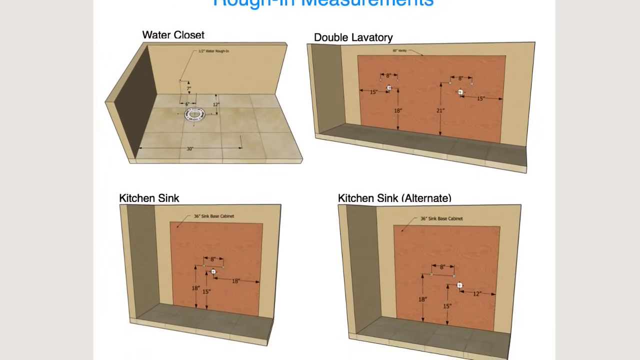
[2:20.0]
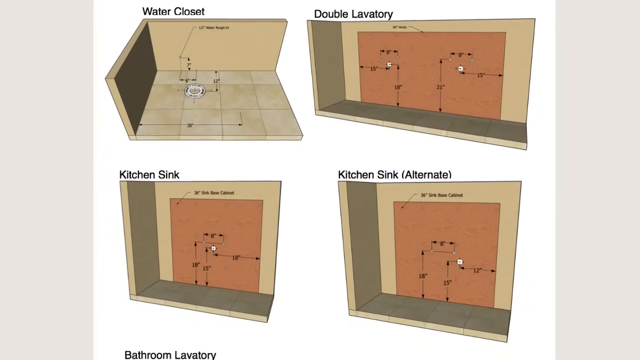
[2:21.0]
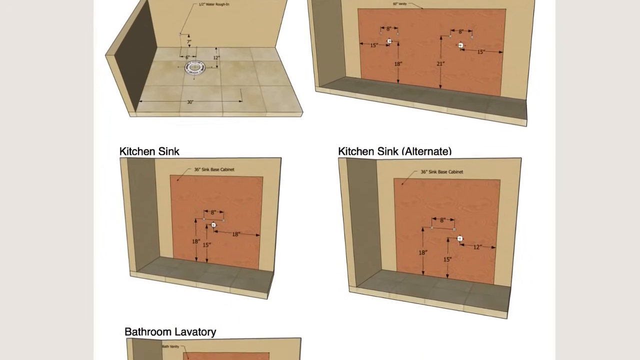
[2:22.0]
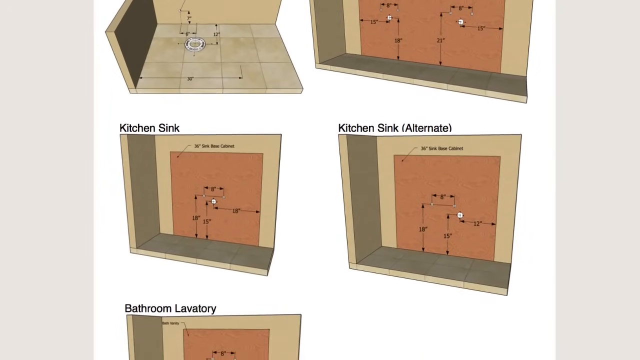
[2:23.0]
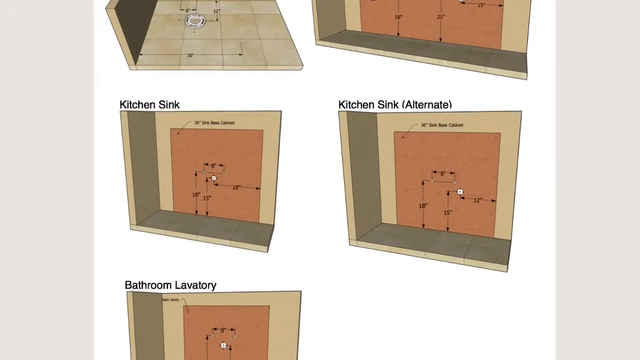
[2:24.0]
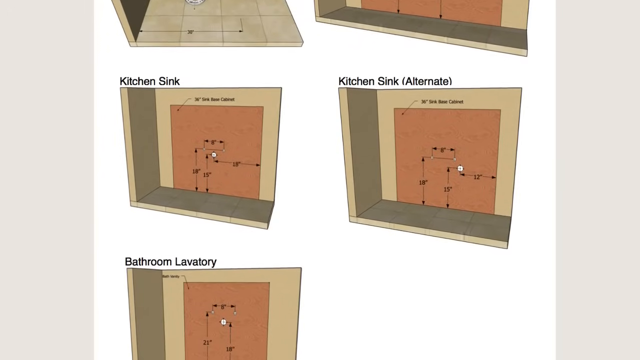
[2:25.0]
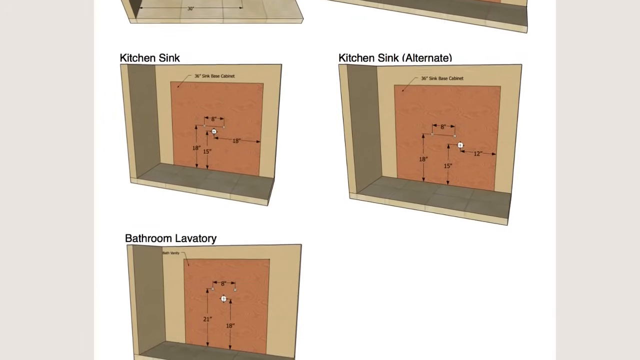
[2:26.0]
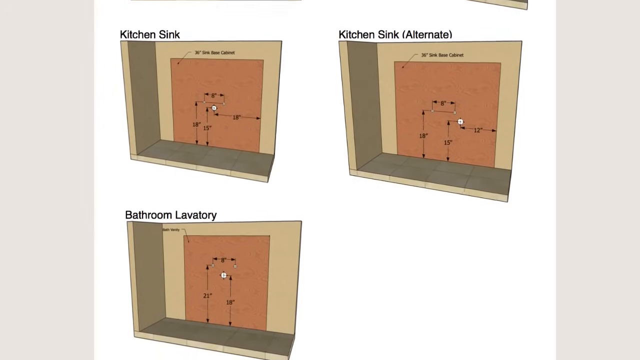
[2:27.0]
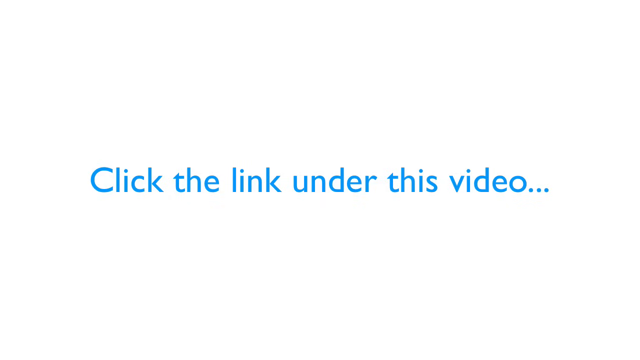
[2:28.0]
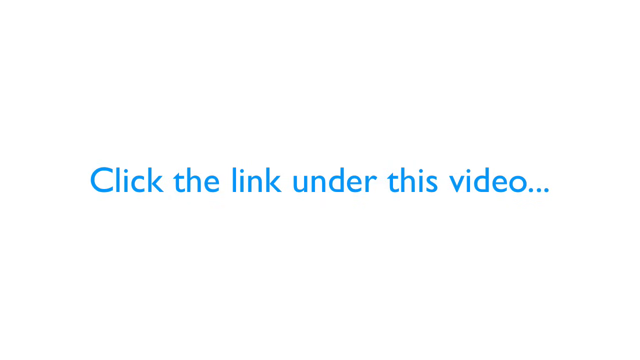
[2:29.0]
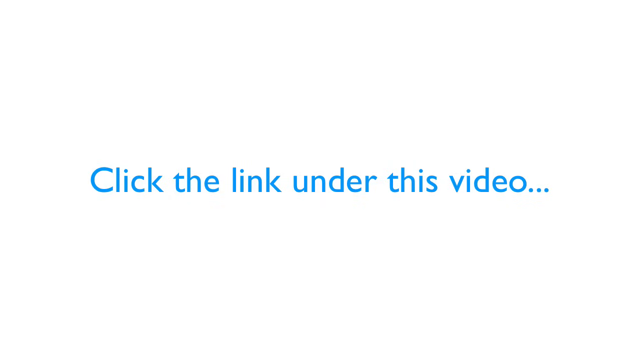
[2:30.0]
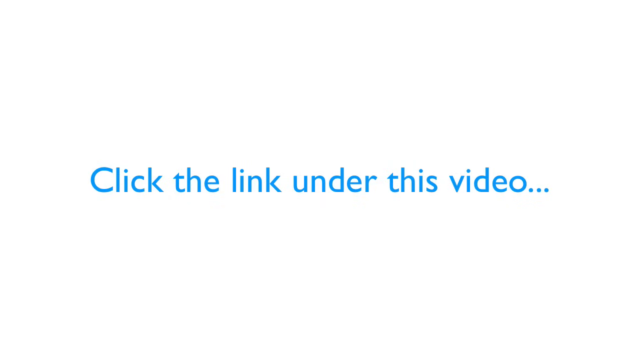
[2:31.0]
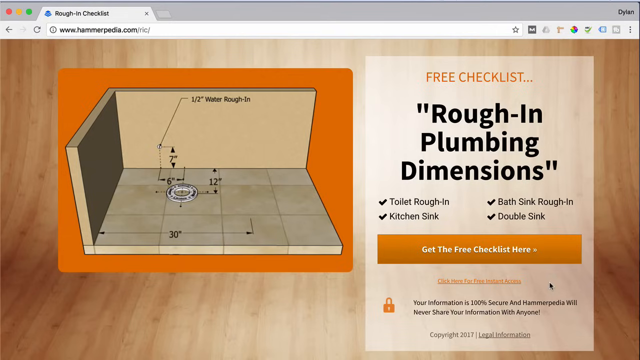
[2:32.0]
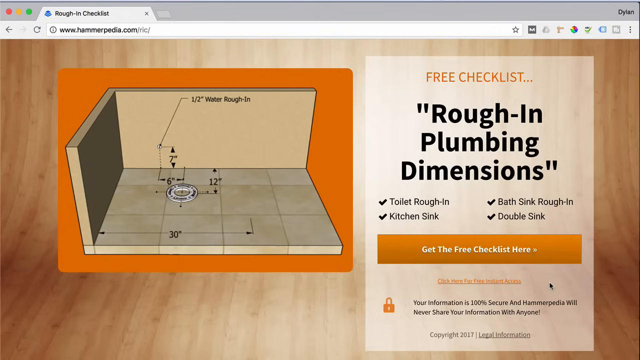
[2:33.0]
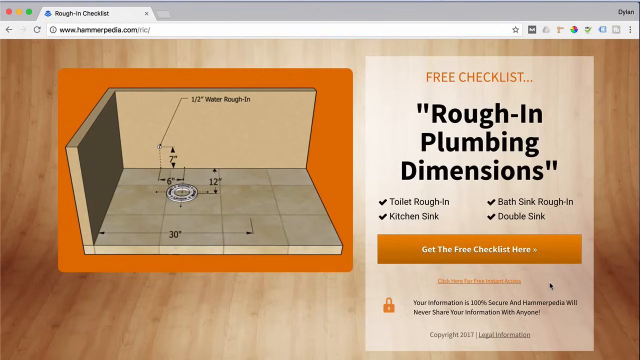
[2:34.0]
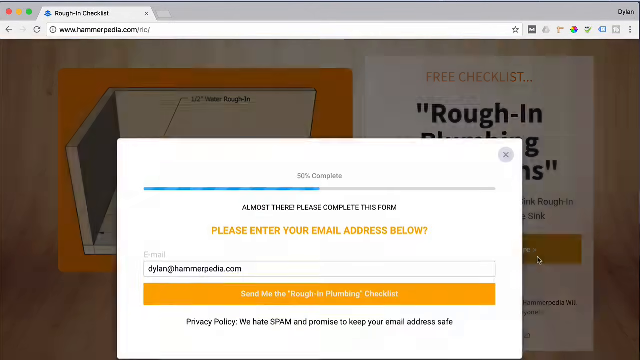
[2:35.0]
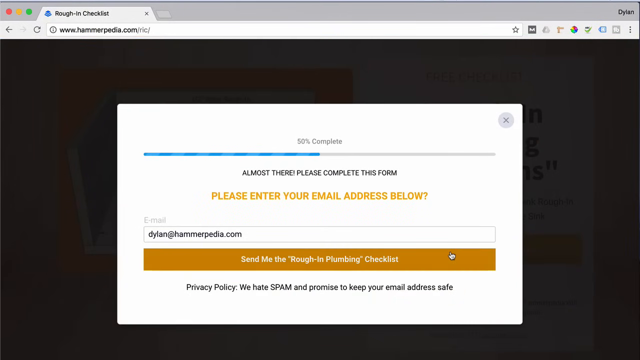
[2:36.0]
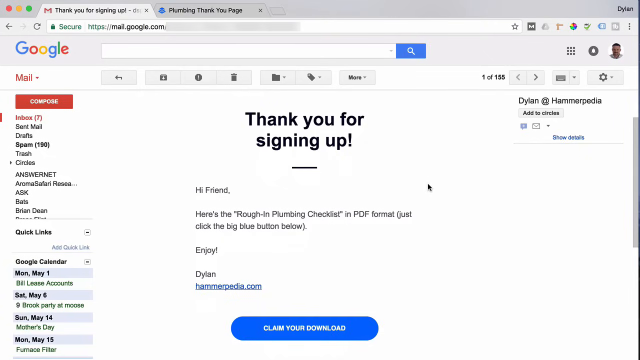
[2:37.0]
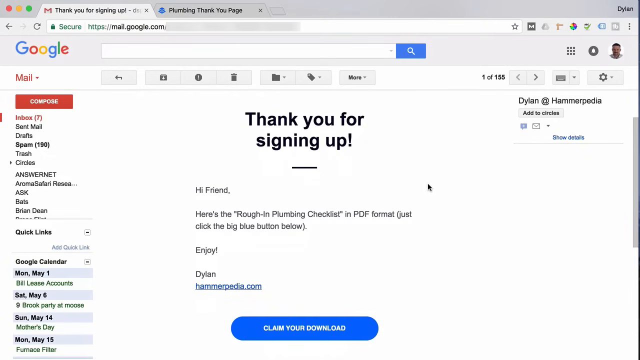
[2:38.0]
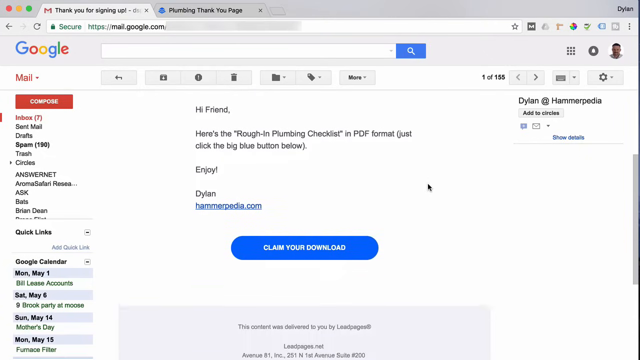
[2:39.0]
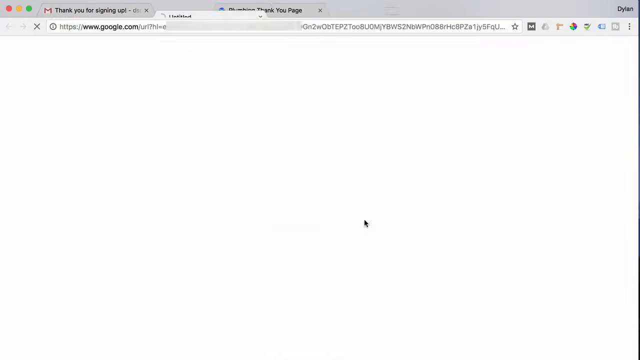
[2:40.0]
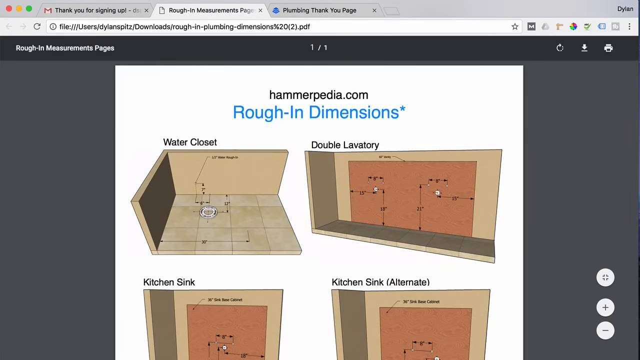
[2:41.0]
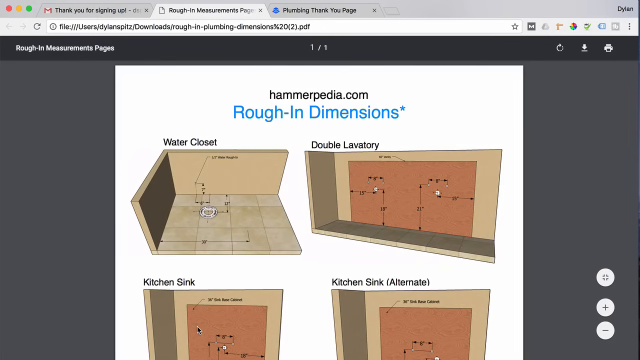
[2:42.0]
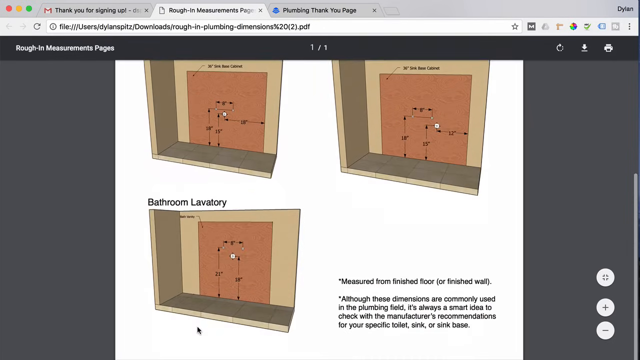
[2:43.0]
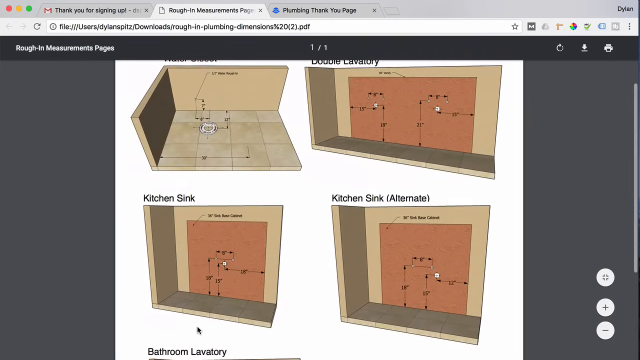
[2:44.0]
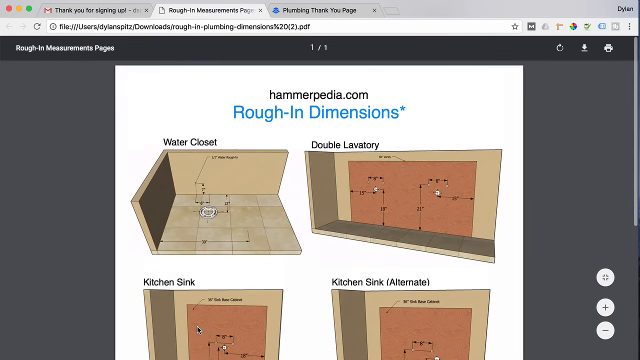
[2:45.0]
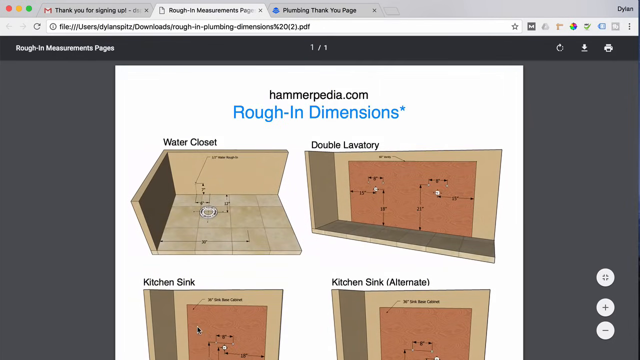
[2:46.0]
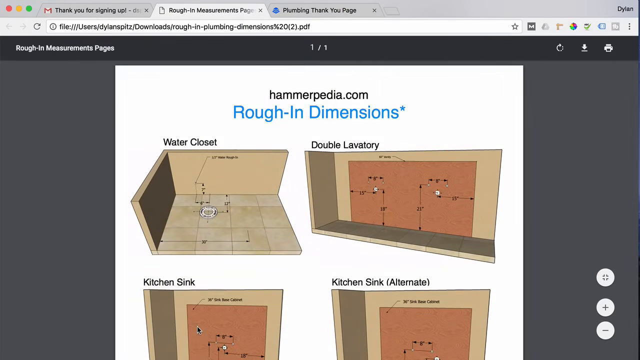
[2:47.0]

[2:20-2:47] Animated panels in greenish grey and dark greenish yellow appear on a white background, labelled "Water Closet" and "Double Lavatory" on the first two and "Kitchen Sink" and "Kitchen Sink (Alternate)" on the bottom two. A fifth panel is revealed with the text "Bathroom Lavatory" on top of it. Blue text on a white background then reads "Click the link under this video..." A web page for Harmapedia.com follows, with what looks like one of the earlier panels on the left side of the page, showing some measurements, and text including "Free checklist..." and "Rough-in plumbing dimensions" on the right side; the page background appears wooden. An online form completion status page follows, at 50%. Then a Gmail message shows the text "Thank you for signing up!" on top of an email to Dylan. A "Claim your download" button is briefly shown, and a cursor clicks it to reveal the earlier page with the five panels scrolling up and down.